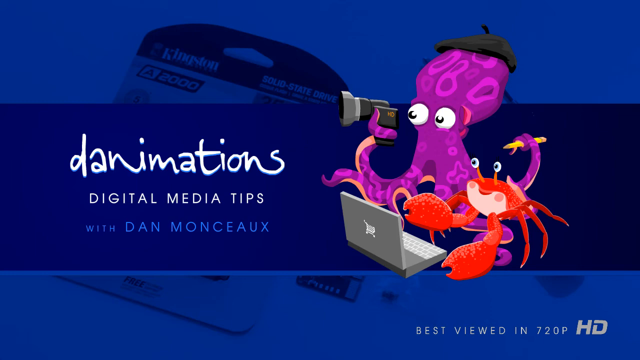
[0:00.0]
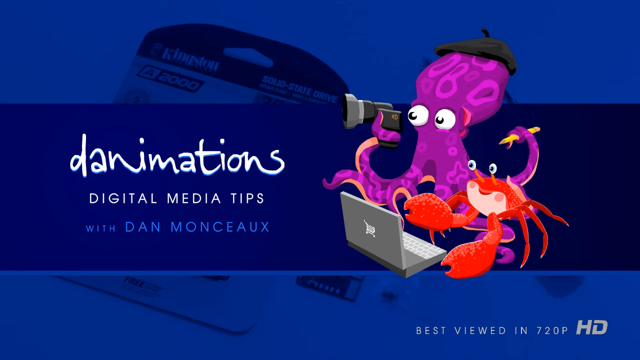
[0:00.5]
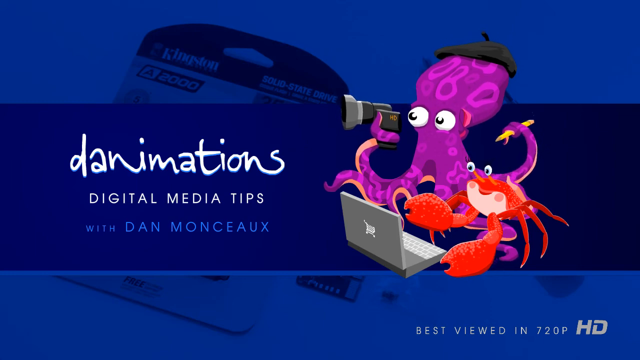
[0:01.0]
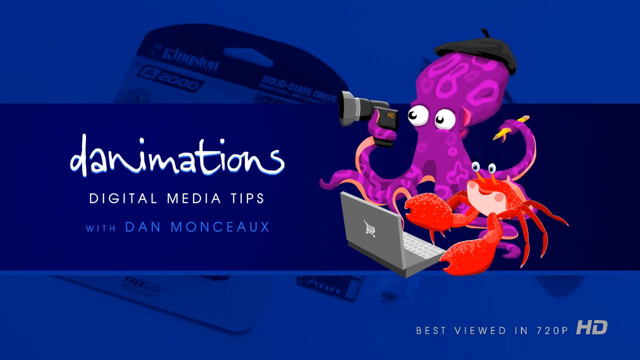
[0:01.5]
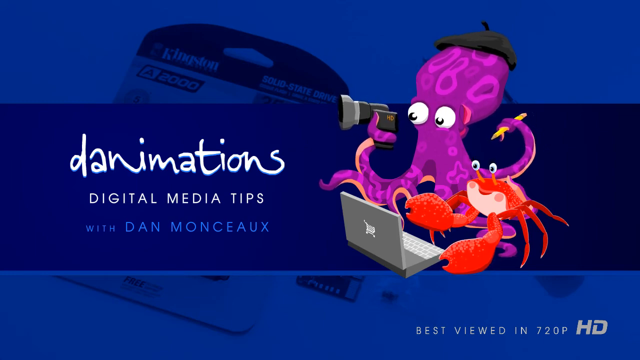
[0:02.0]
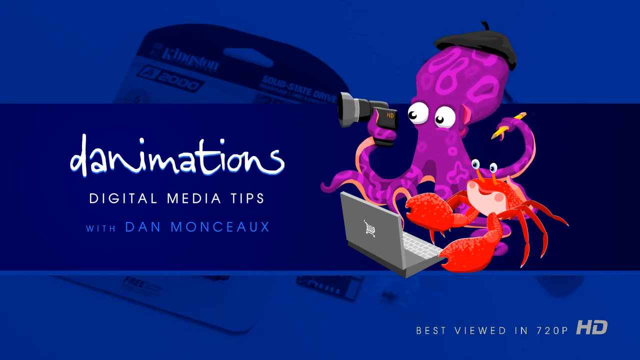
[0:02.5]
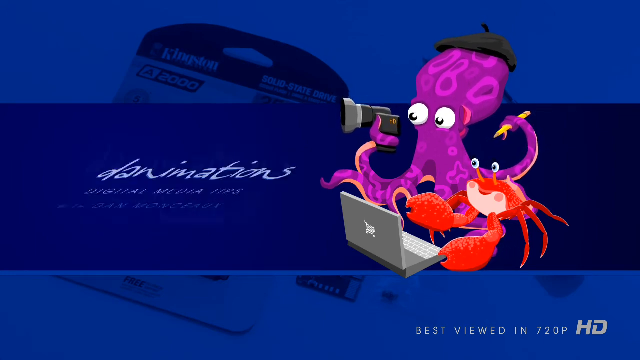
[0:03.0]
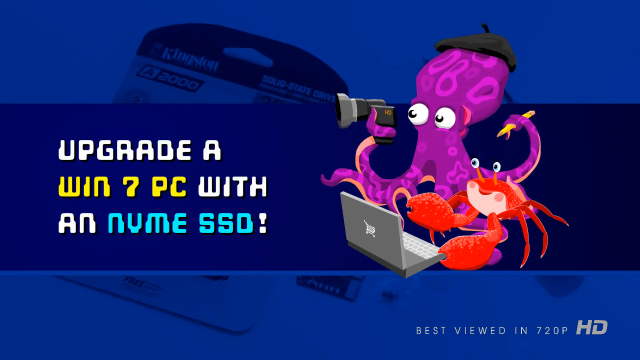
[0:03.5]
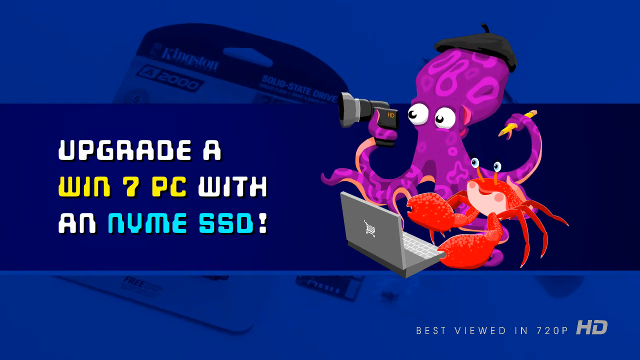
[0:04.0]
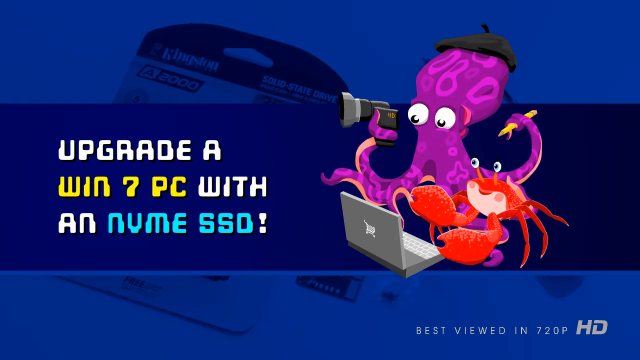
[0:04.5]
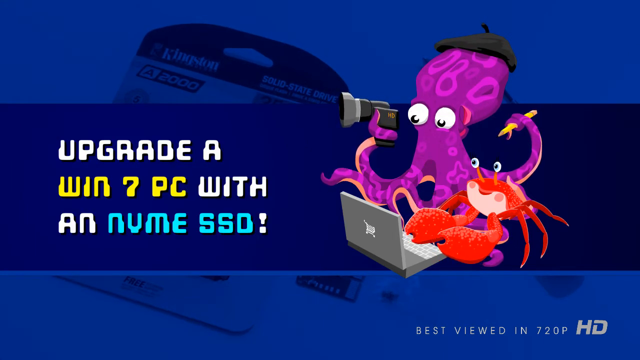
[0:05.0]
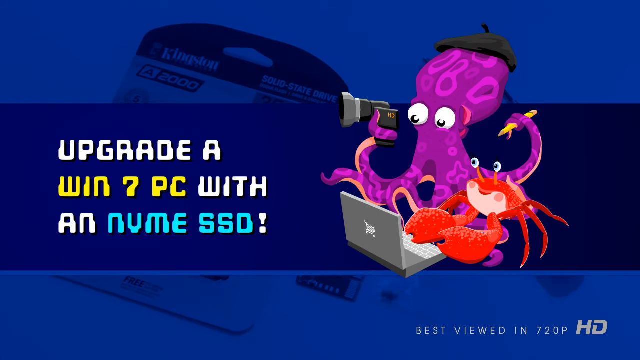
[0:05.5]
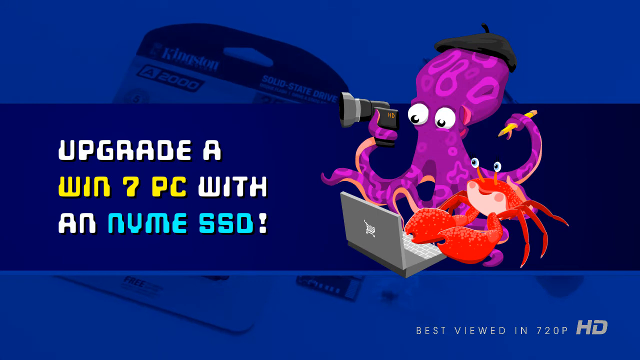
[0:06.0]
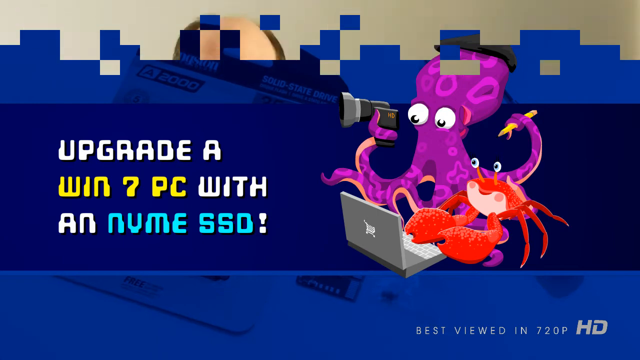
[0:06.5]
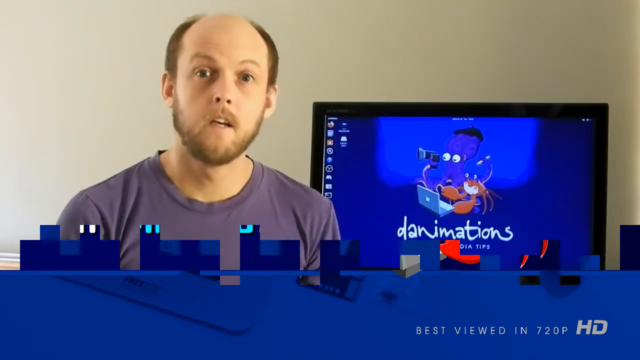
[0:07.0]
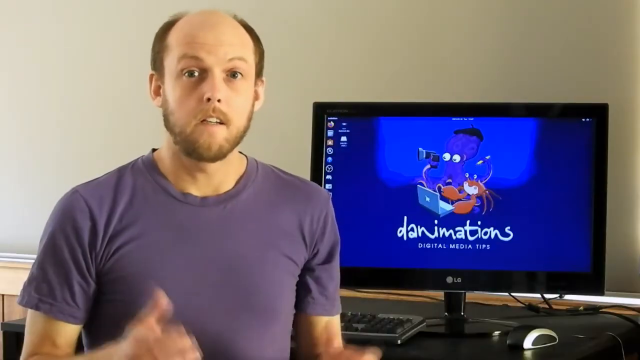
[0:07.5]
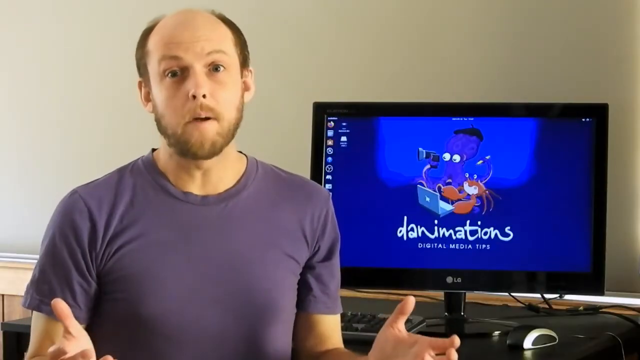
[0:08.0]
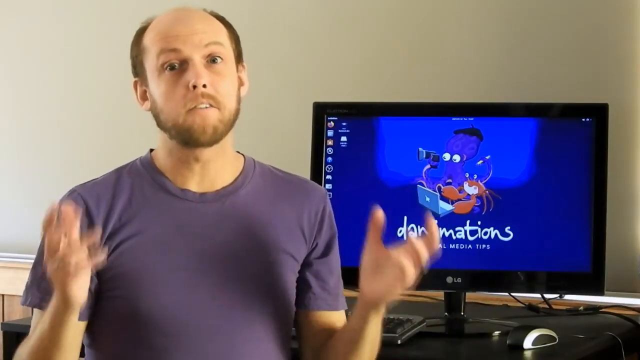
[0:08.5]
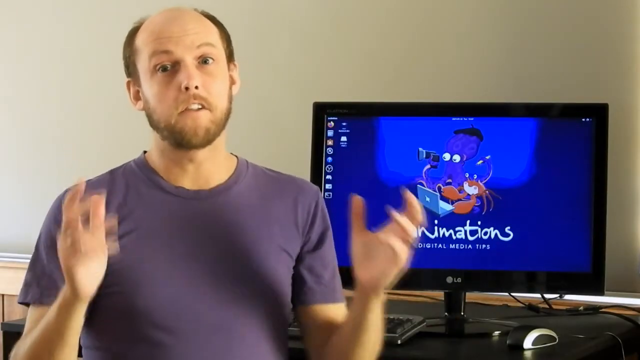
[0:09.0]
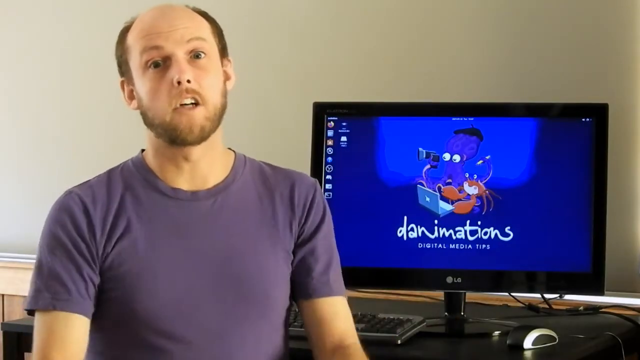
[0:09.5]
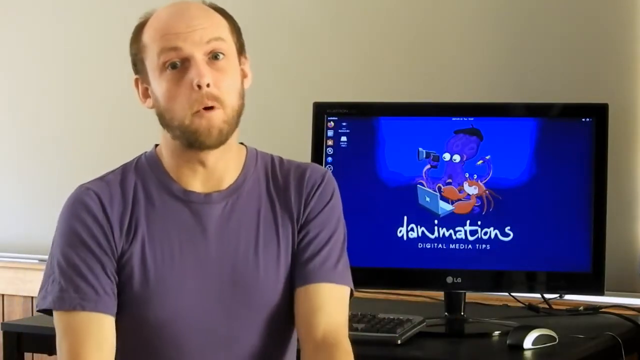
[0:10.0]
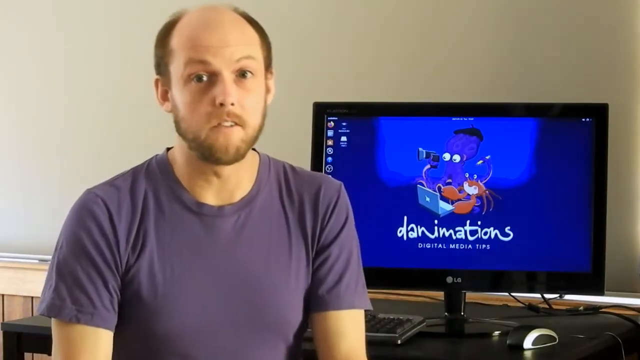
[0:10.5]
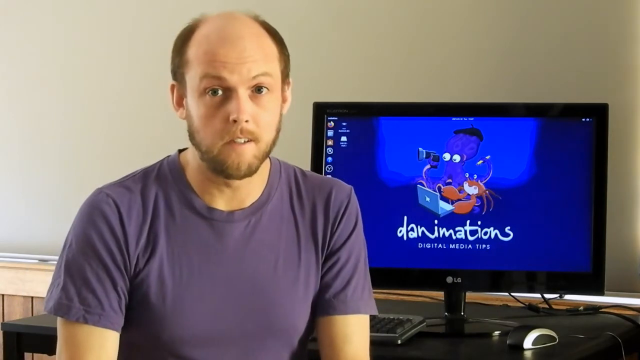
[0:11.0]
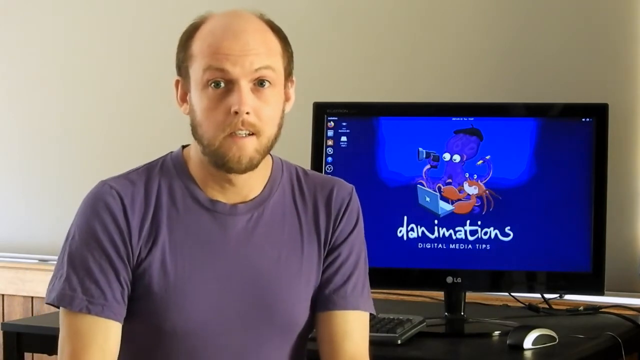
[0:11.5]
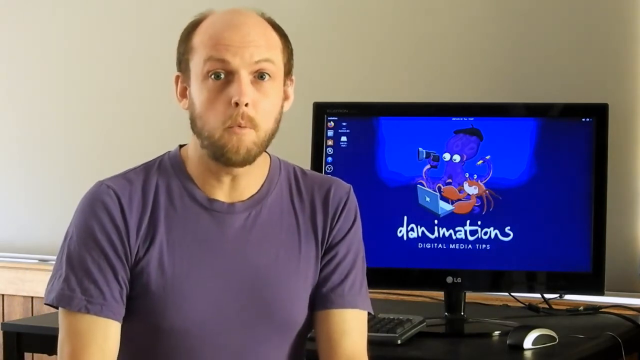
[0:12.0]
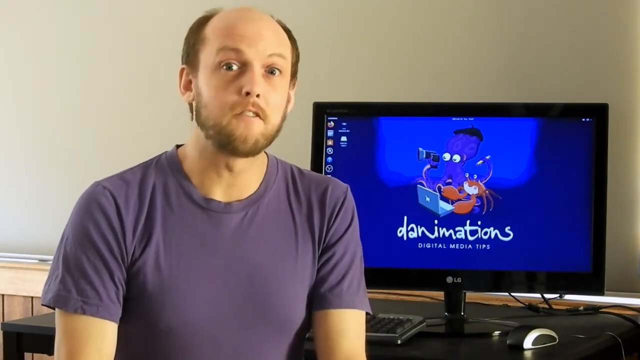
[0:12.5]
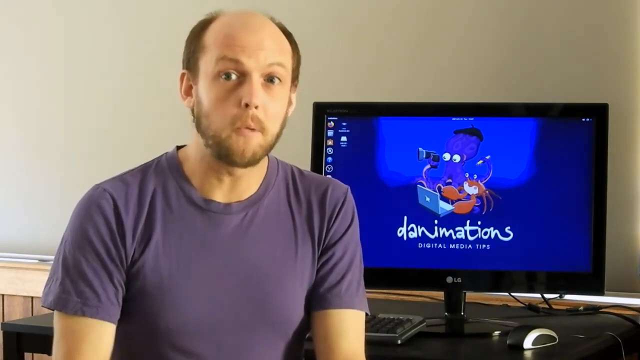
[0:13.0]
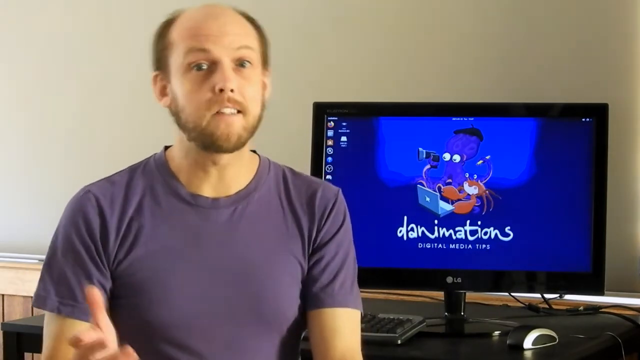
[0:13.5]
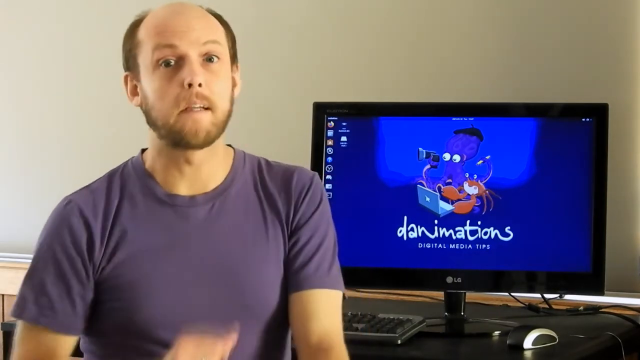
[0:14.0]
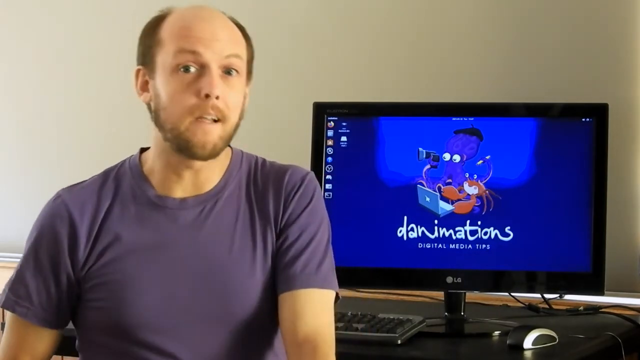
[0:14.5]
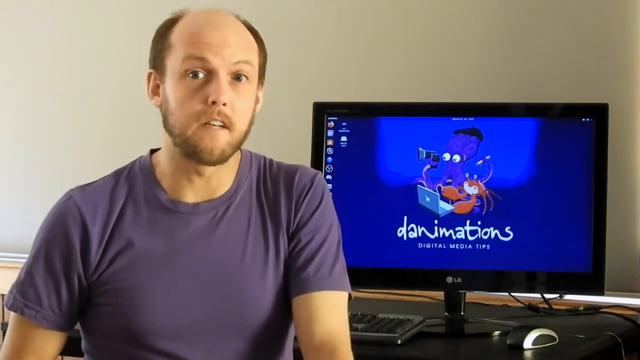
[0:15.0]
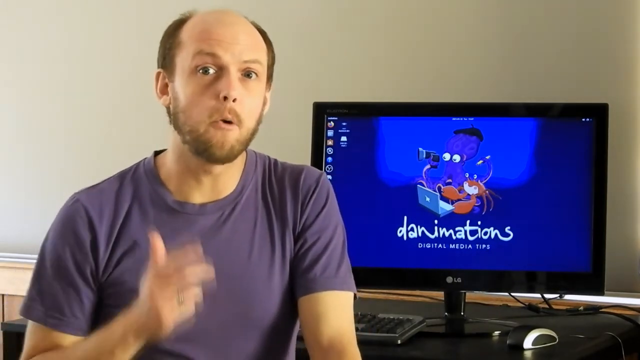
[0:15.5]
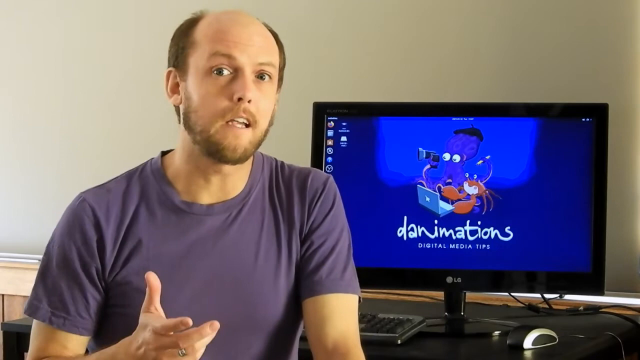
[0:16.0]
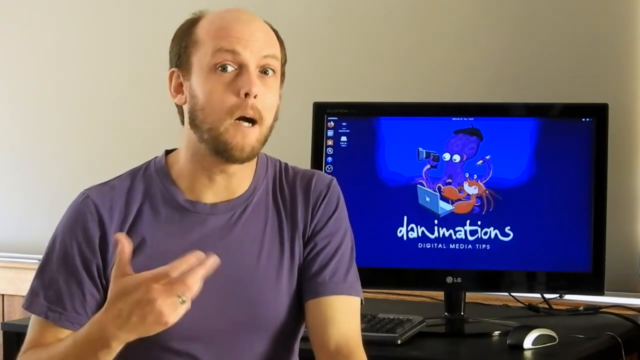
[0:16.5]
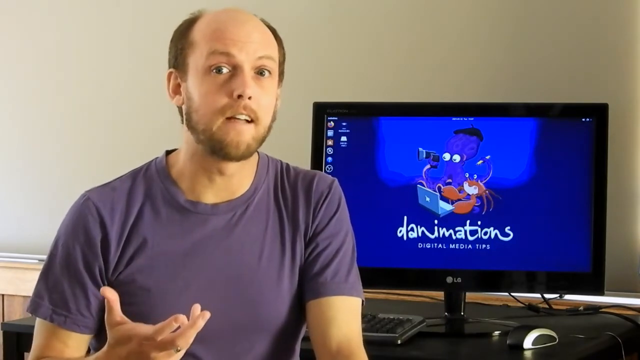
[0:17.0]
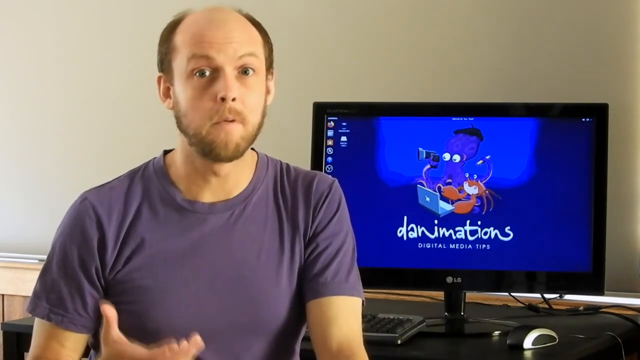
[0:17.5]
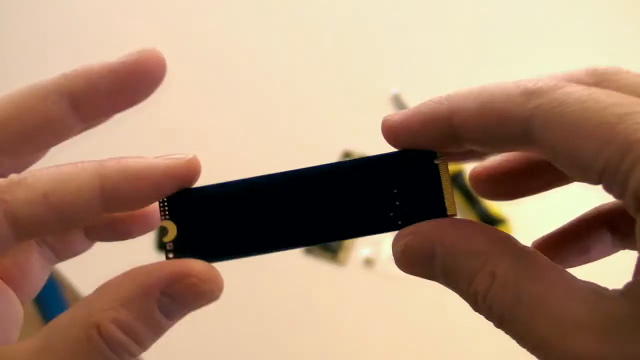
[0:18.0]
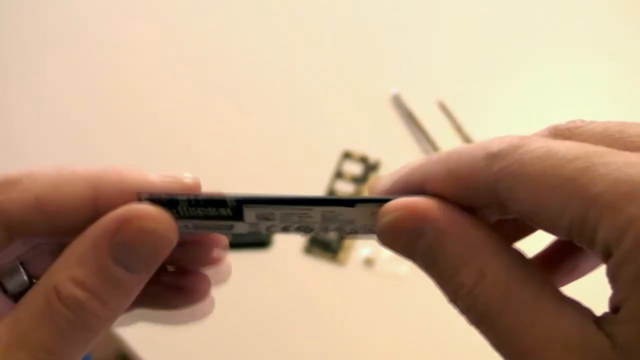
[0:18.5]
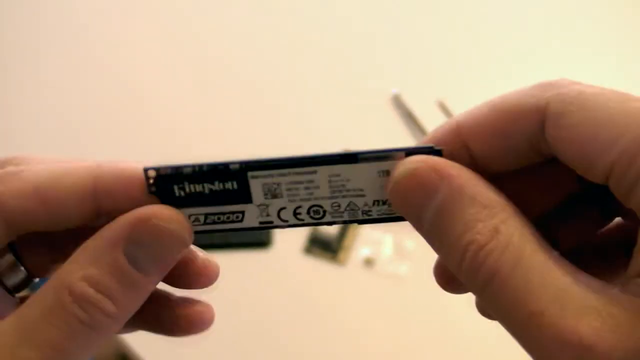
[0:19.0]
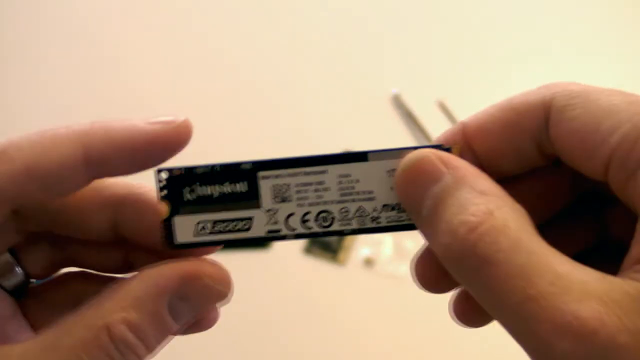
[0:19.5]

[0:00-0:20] The video is a little wider than it is tall. It opens on a medium to dark blue background. On the left, white text in a kind of hybrid between cursive and print reads "Danimations." Below that, in a regular font, it says "Digital Media Tips," and below that, in light blue, it says "Dan" followed by a last name spelled M-O-N-C-E-A-U-X. To the right of the text are a couple of cartoon-like animated characters: a purple octopus holding a camera and a red crab looking at a laptop. Both face the lower left-hand part of the screen, and their eyes move around. The text on the left then flips like a card and reads "upgrade a Win 7 PC with an NVME SSD," with "Win 7 PC" in yellow, "NVME SSD" in light blue, and the rest in white. The screen then fades from top to bottom in a kind of pixelated fashion, revealing a man on the left facing the camera. He is white, wears a purple shirt, has kind of a horseshoe haircut and a beard, and his hair is kind of brownish-red. Behind him, on a monitor facing the viewer, are the same logo from the right side of the opening and the same "Danimations" text. He talks to the viewer, gesturing with his hands.